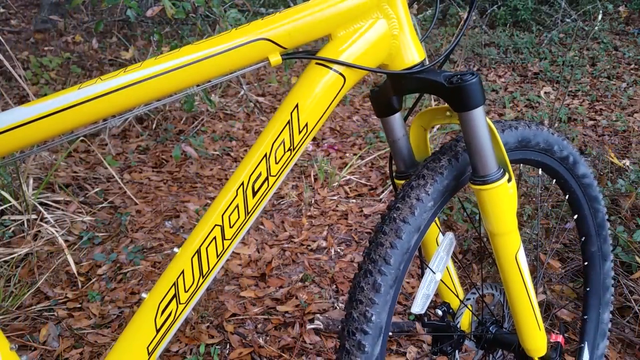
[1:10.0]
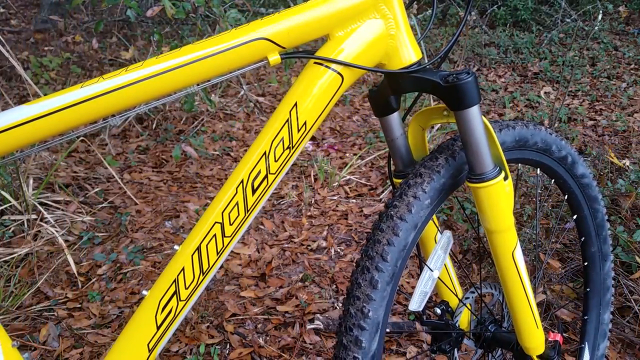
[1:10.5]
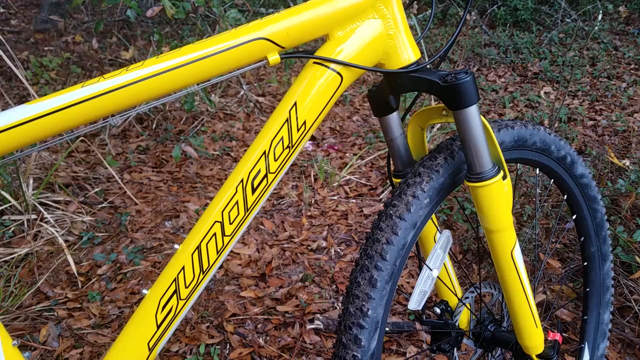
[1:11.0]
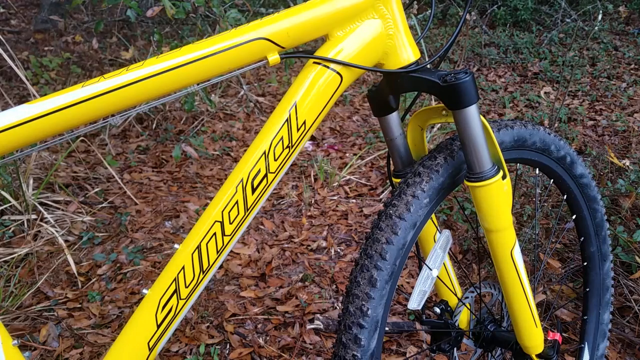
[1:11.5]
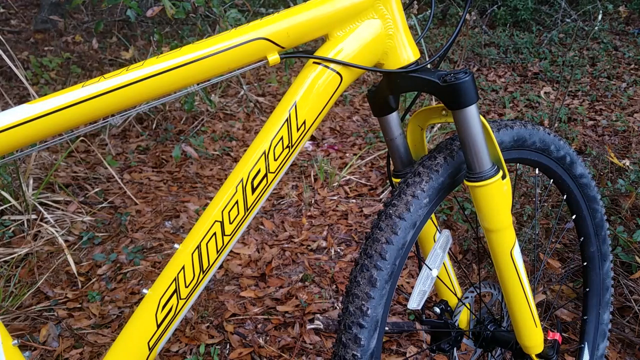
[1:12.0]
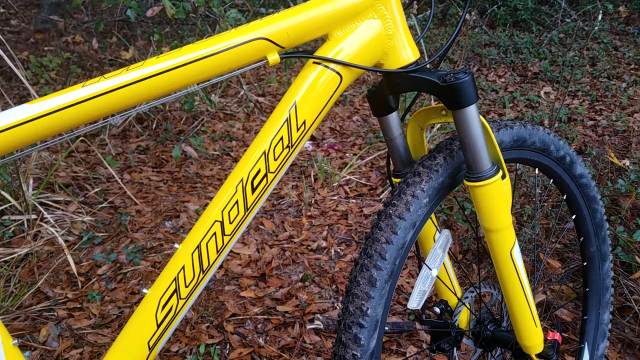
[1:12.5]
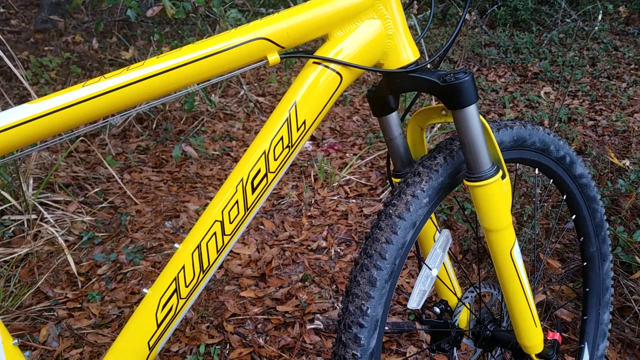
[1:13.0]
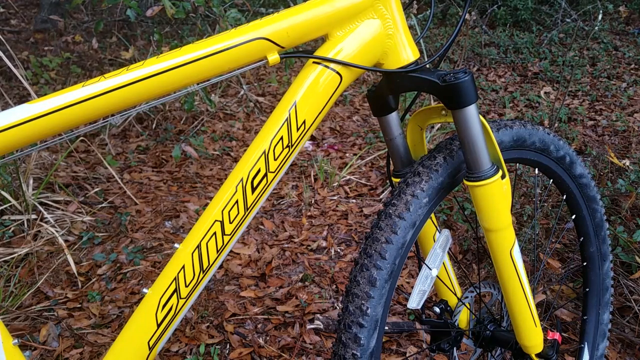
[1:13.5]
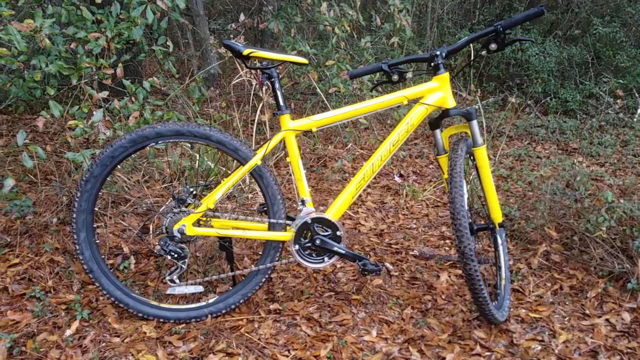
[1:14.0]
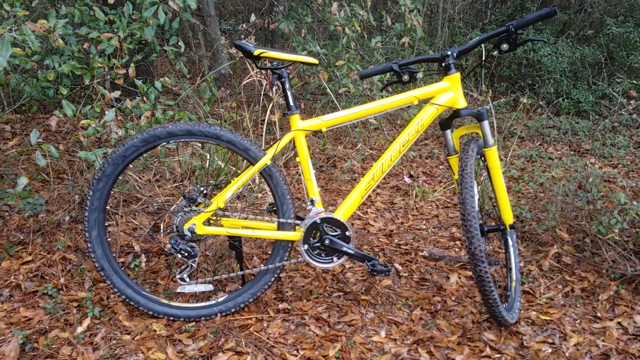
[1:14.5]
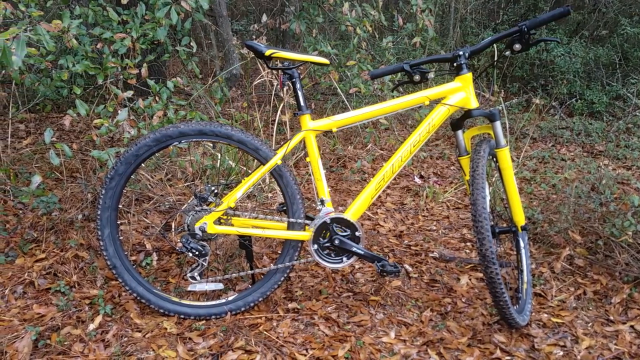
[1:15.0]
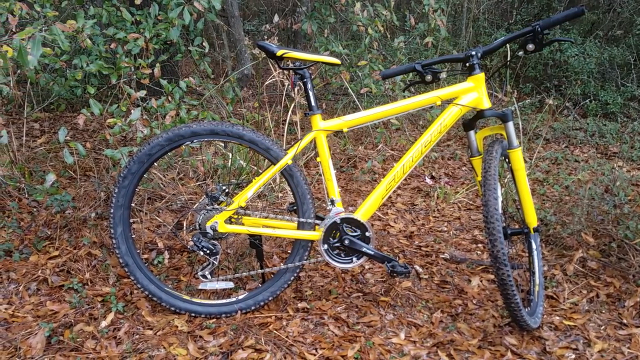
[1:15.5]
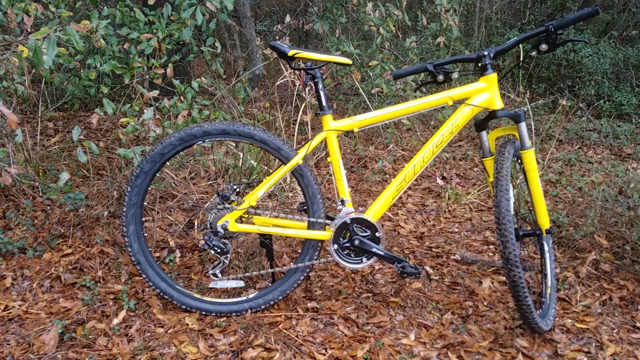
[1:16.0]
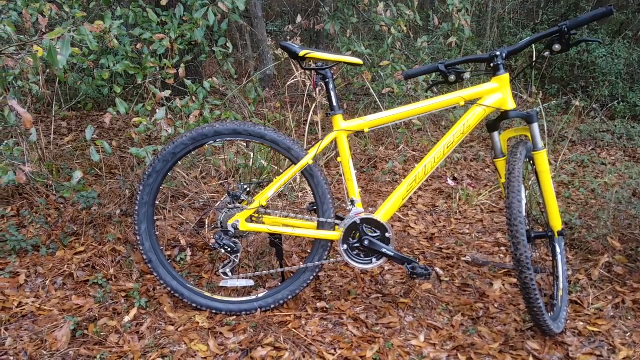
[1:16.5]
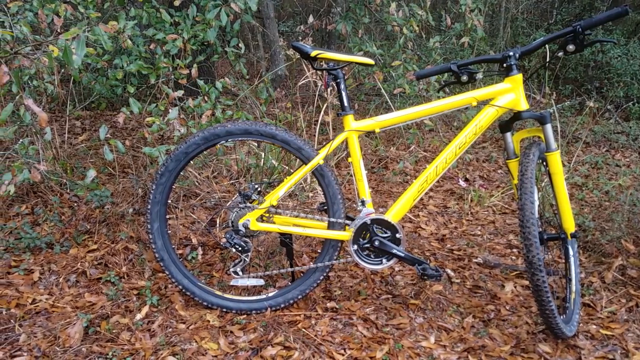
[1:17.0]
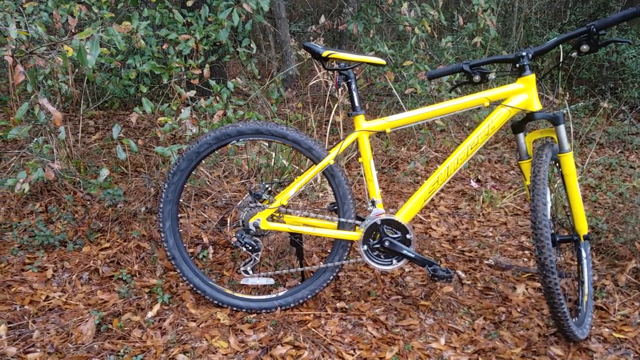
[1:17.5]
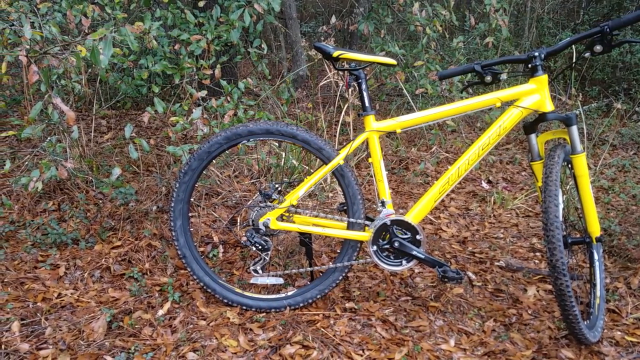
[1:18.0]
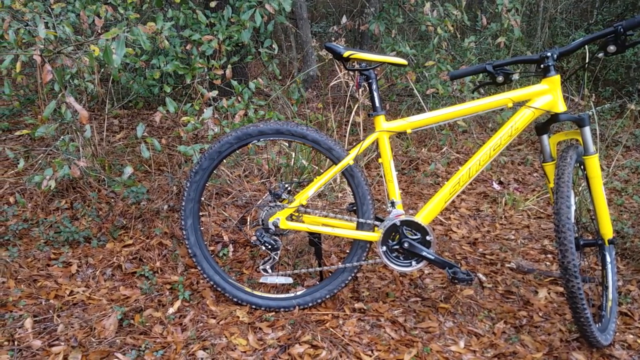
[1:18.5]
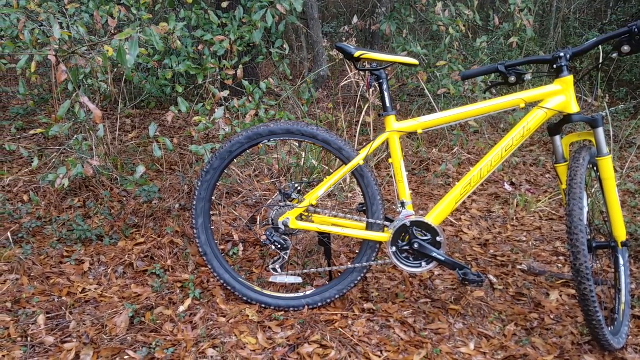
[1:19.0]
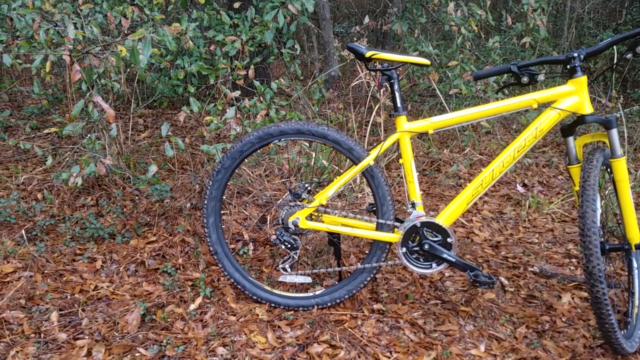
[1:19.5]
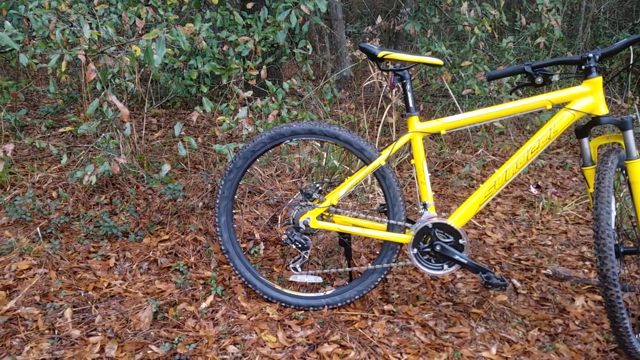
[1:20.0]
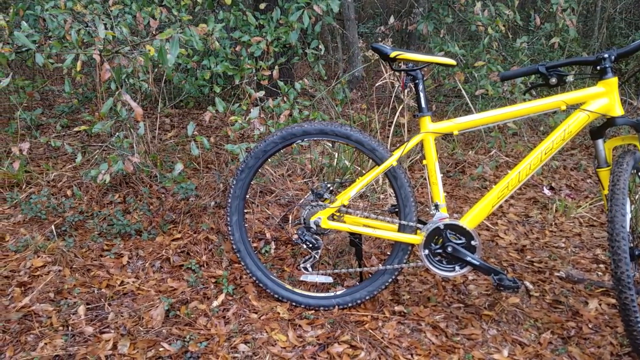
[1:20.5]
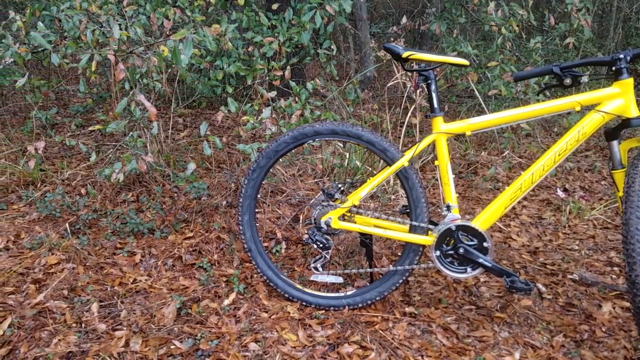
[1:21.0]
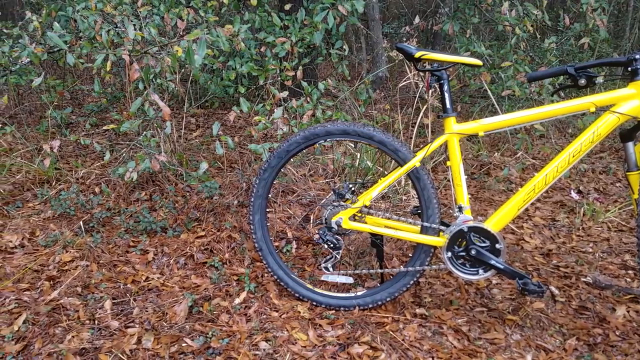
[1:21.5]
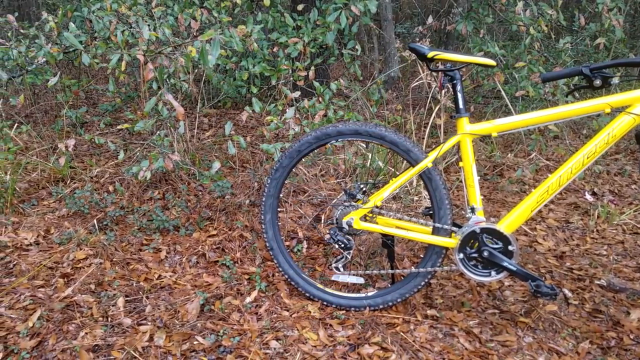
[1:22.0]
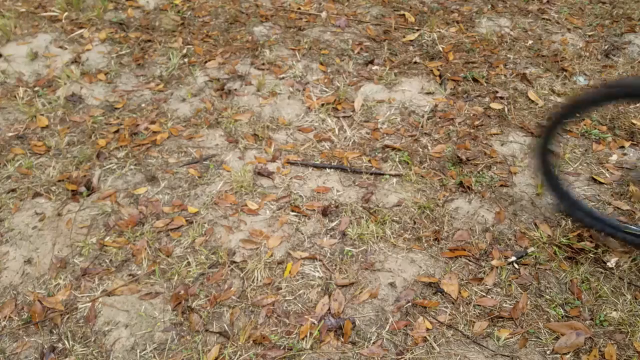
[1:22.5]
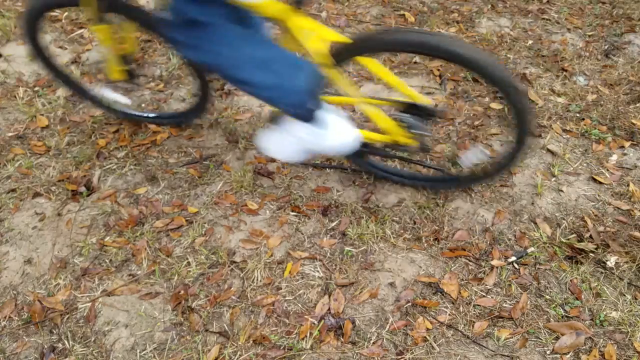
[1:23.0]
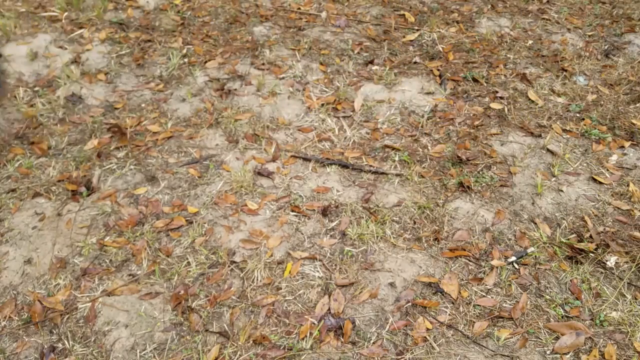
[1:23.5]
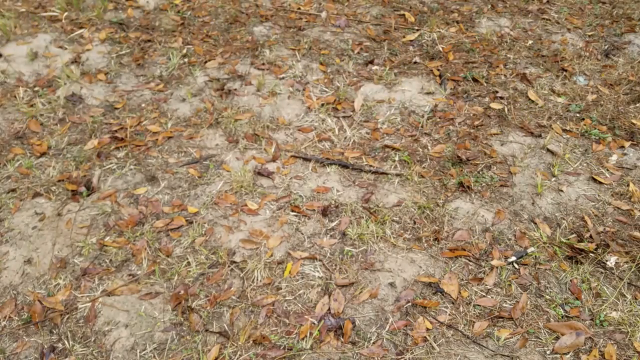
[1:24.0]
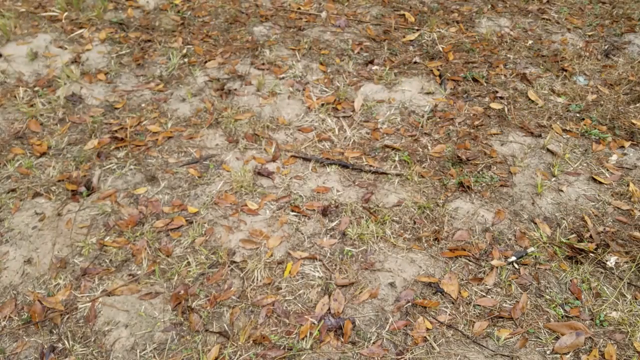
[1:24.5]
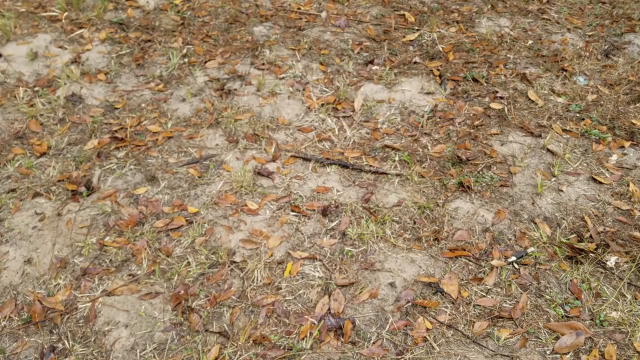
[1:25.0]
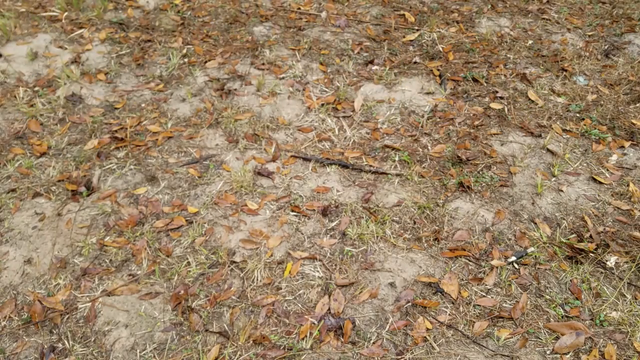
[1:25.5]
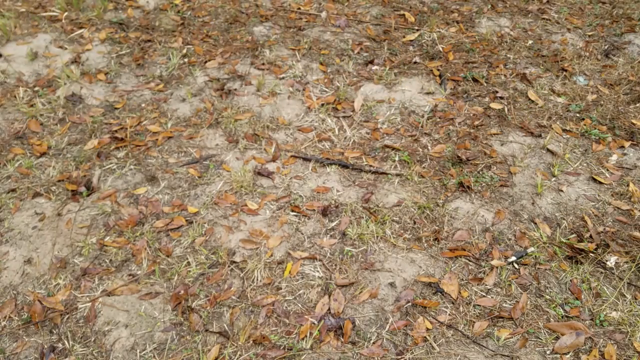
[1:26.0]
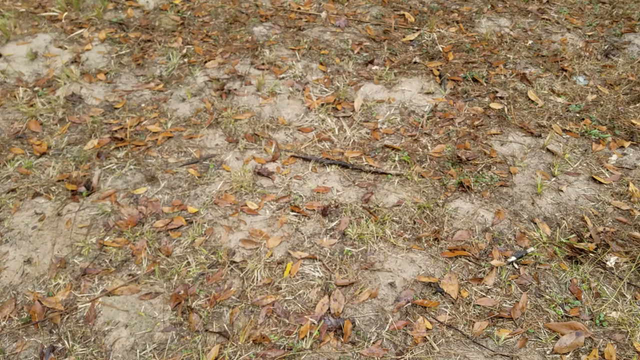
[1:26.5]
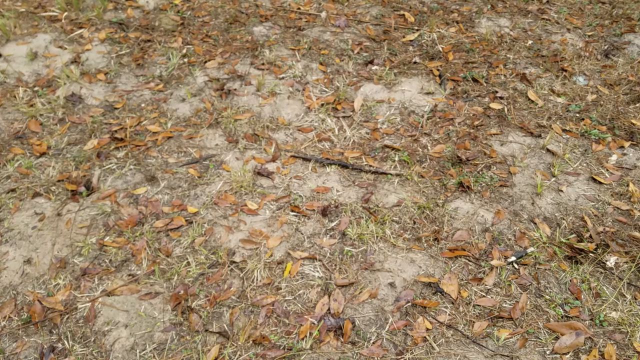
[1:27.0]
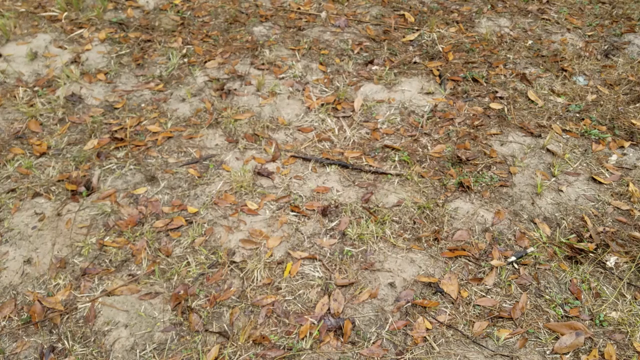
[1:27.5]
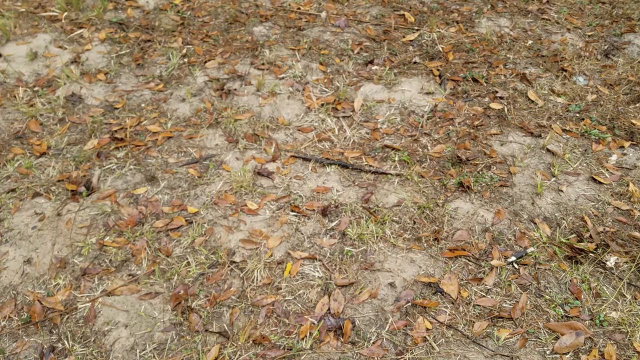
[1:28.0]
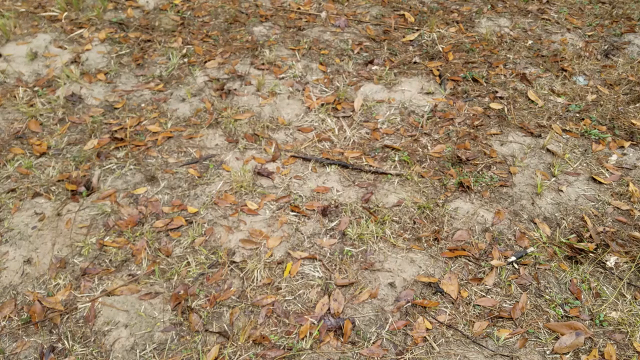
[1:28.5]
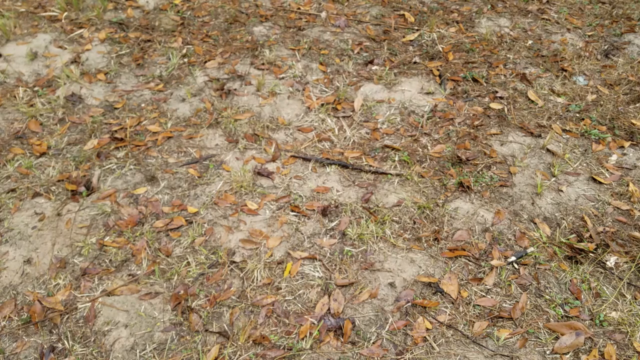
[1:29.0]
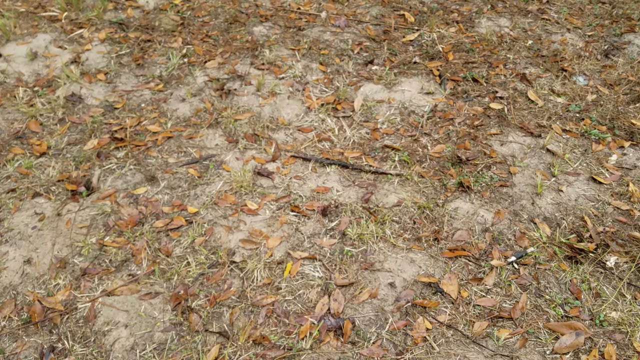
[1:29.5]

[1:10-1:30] This Sundeal-brand mountain bike came from Amazon in a box and has been put together. It is filmed parked, in many pictures and video shots: a yellow bike with black tires, black spokes, a yellow seat with a little black on it, and black handlebars, looking kind of like a bumblebee. The tires look kind of small for it. Someone then rides it across dead leaves mixed with what looks like sawdust, with something like ivy on the ground in the distance. The rider goes by on dead leaves that are pretty flattened.